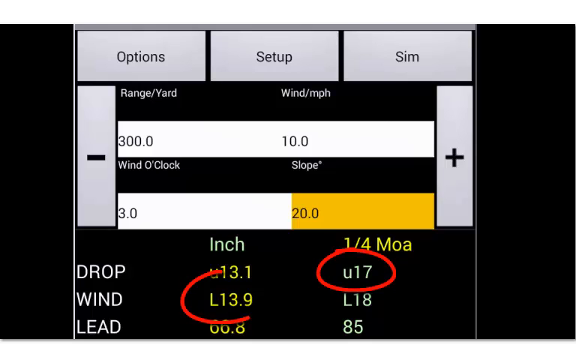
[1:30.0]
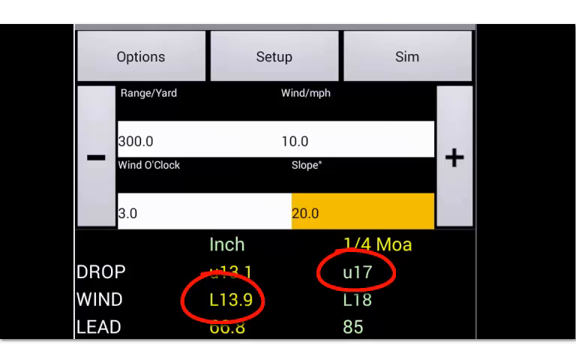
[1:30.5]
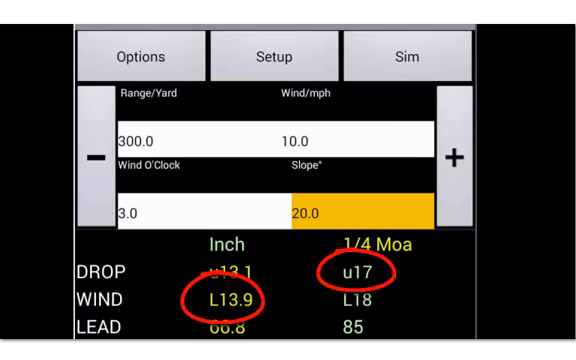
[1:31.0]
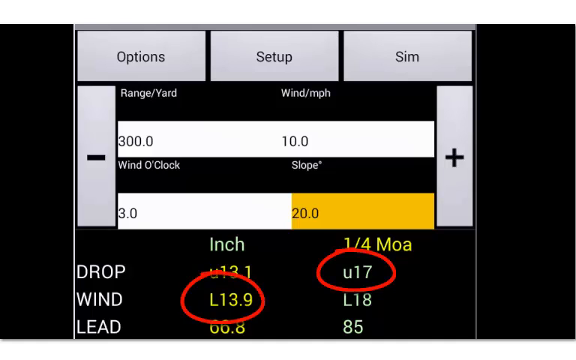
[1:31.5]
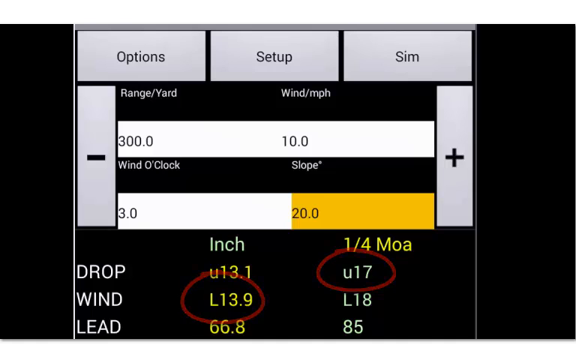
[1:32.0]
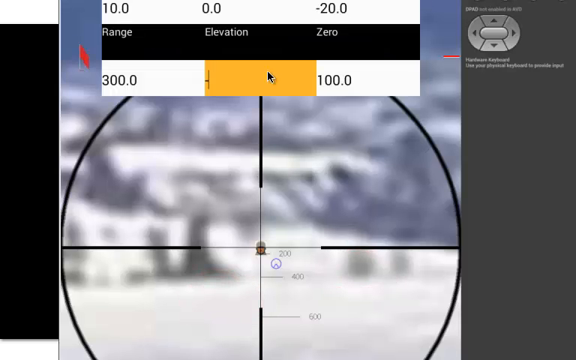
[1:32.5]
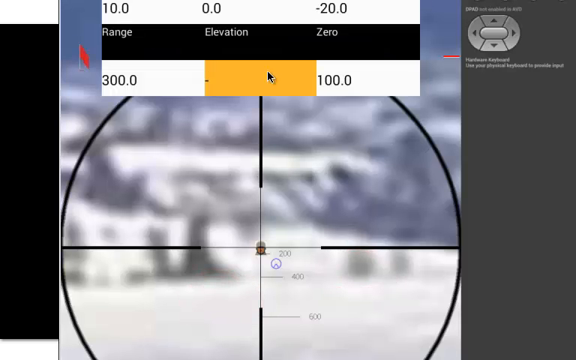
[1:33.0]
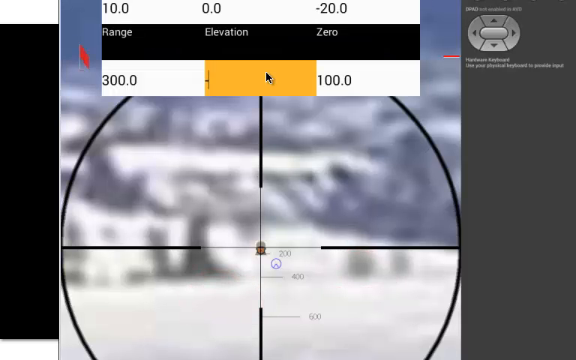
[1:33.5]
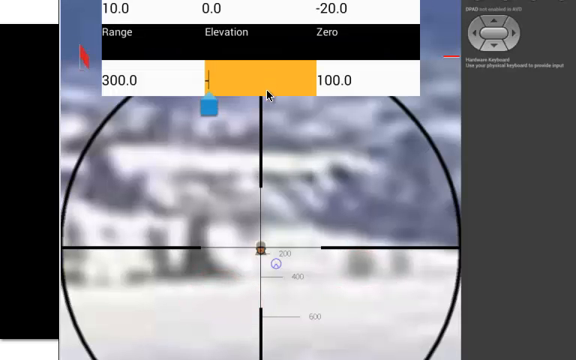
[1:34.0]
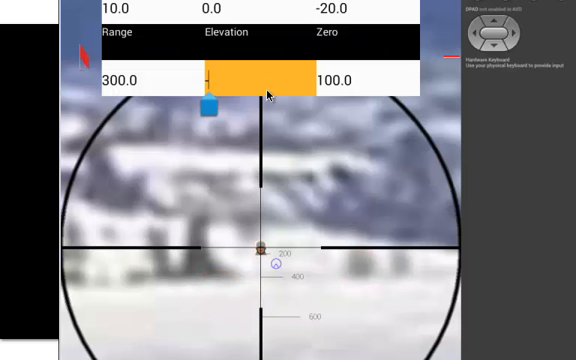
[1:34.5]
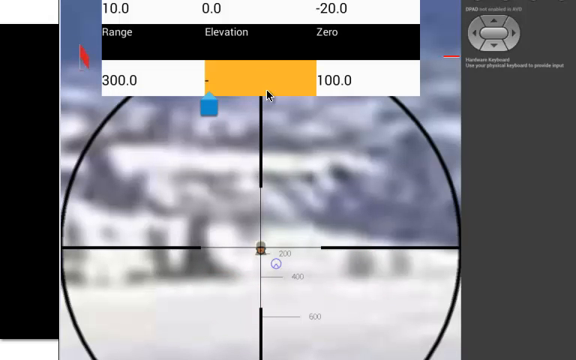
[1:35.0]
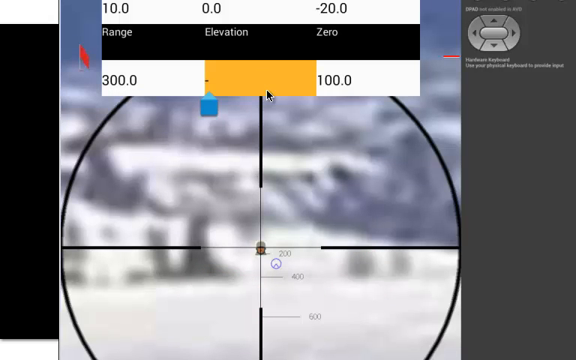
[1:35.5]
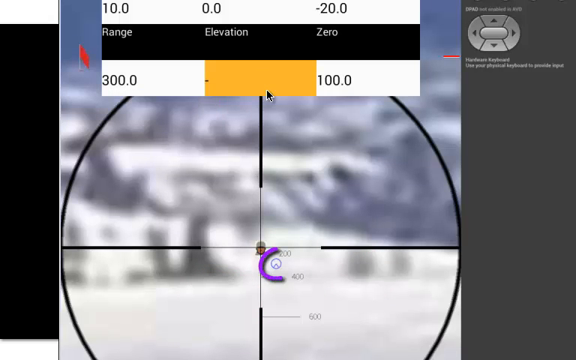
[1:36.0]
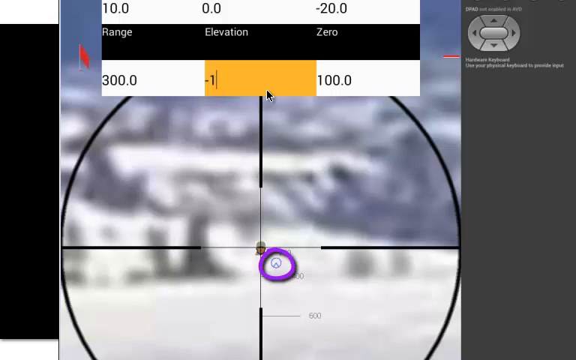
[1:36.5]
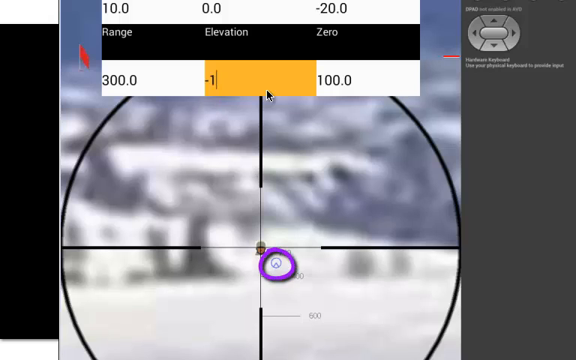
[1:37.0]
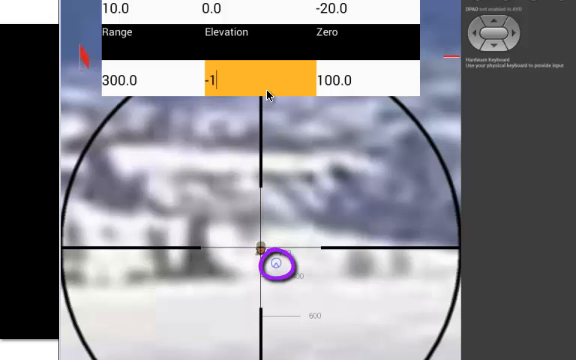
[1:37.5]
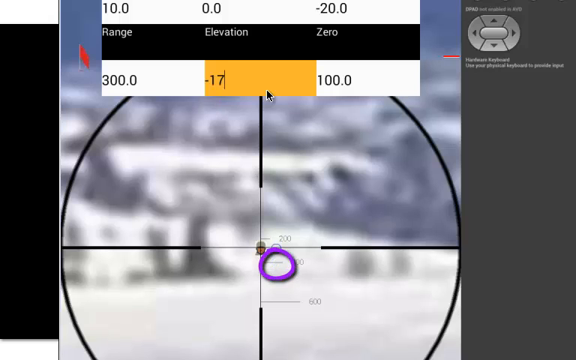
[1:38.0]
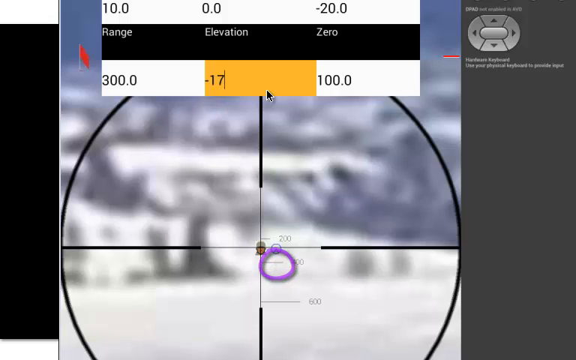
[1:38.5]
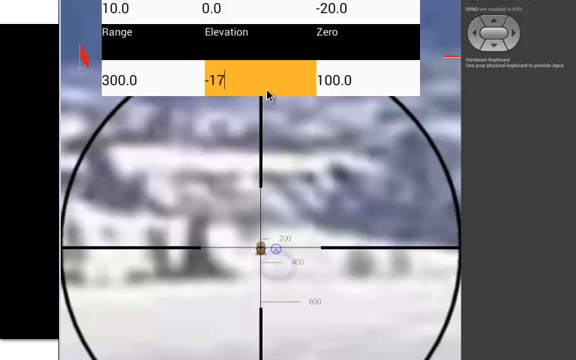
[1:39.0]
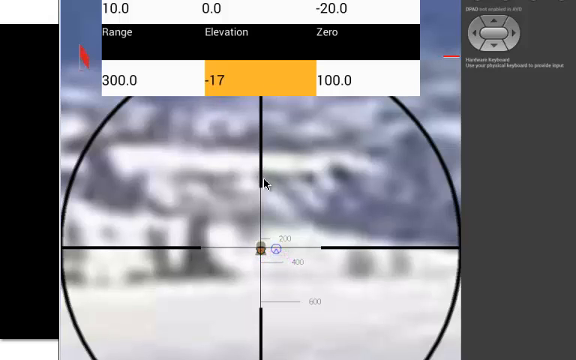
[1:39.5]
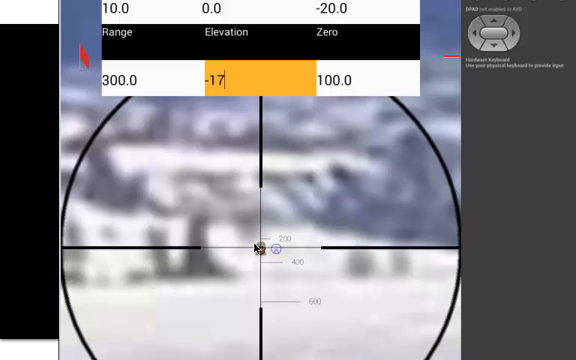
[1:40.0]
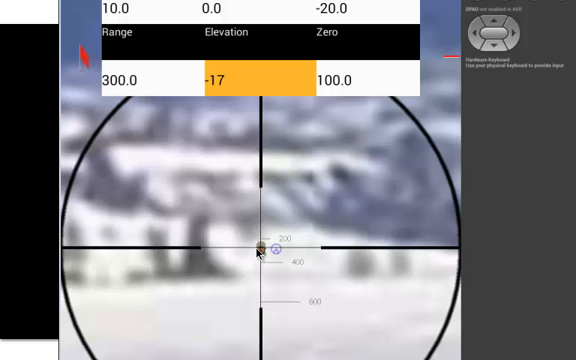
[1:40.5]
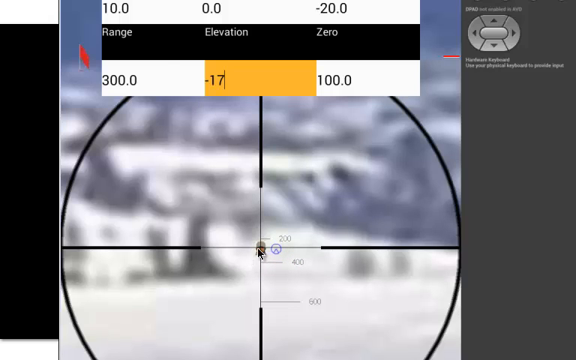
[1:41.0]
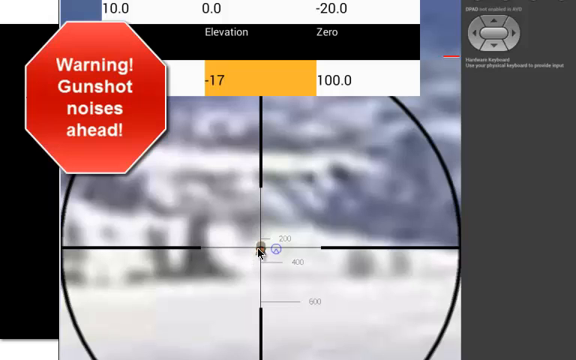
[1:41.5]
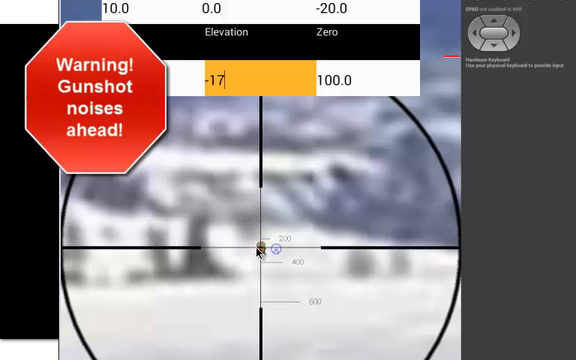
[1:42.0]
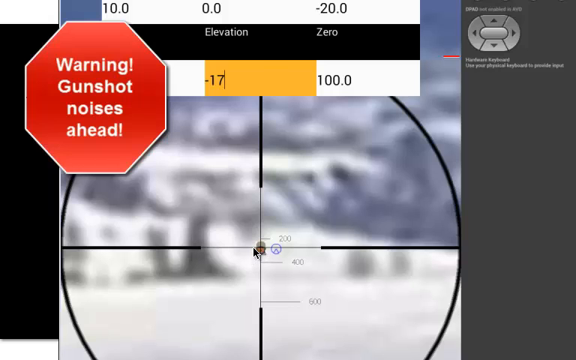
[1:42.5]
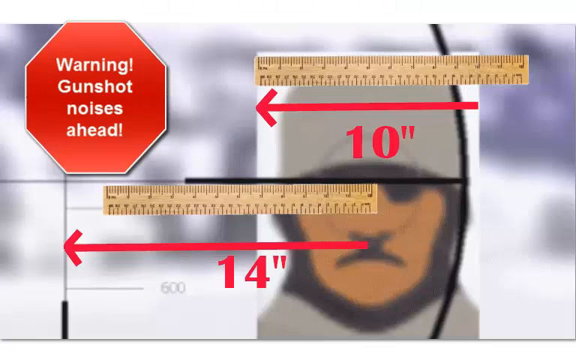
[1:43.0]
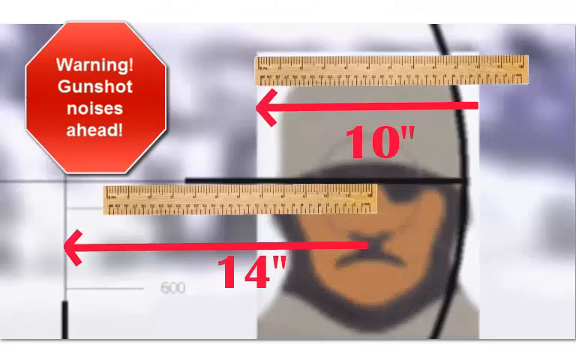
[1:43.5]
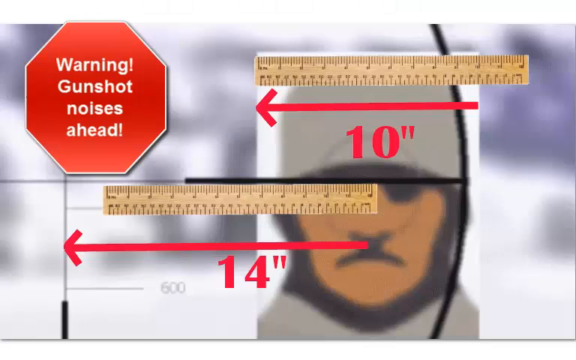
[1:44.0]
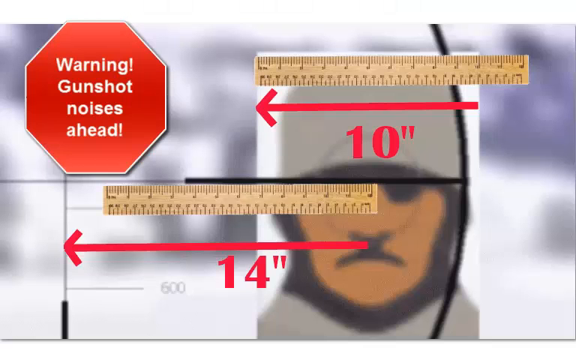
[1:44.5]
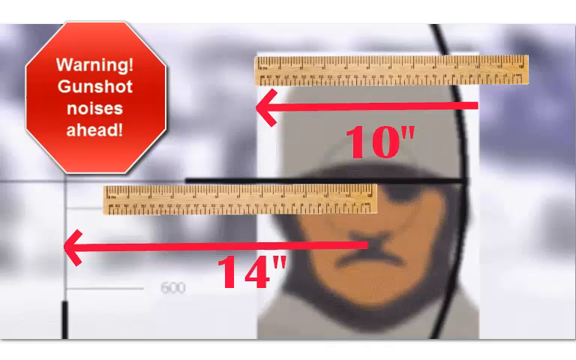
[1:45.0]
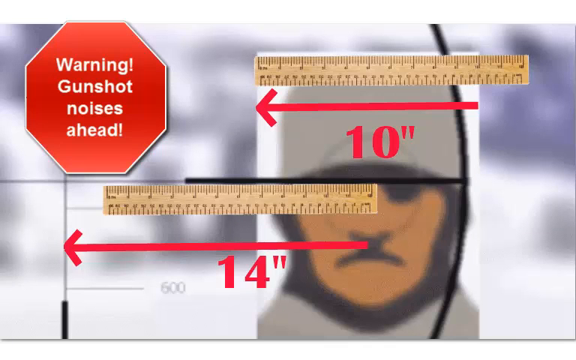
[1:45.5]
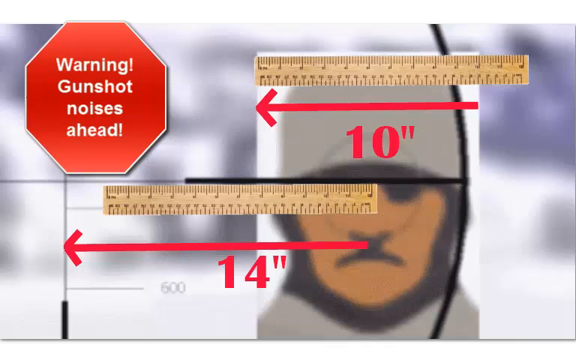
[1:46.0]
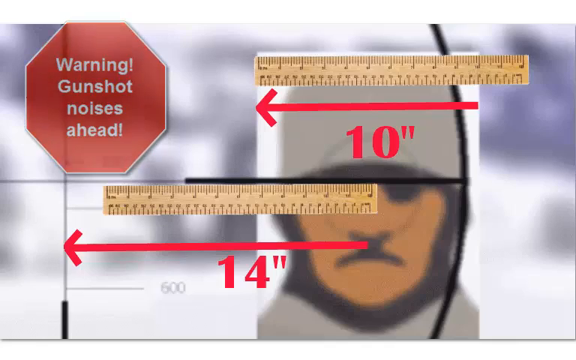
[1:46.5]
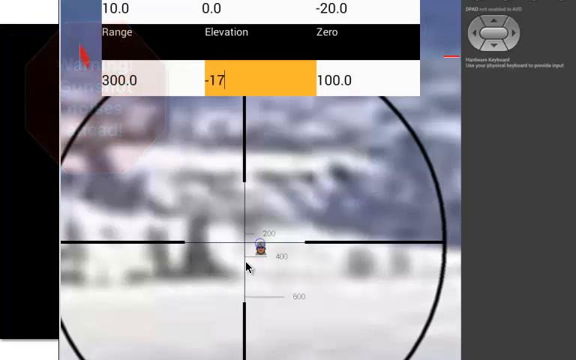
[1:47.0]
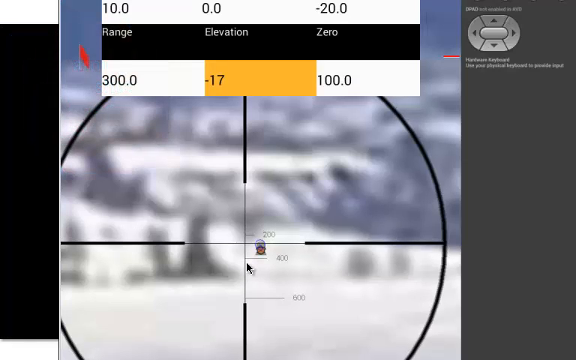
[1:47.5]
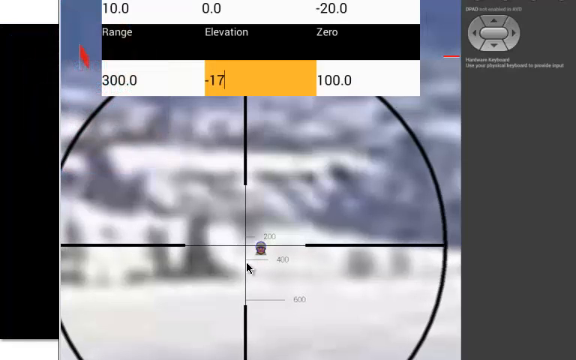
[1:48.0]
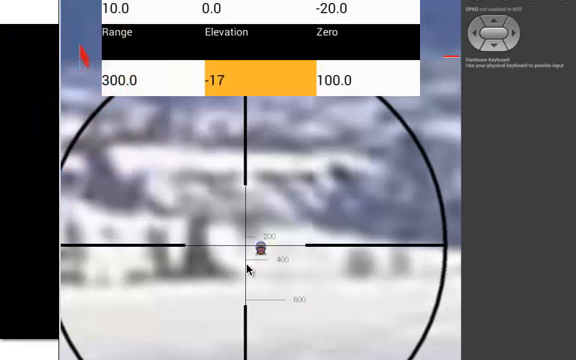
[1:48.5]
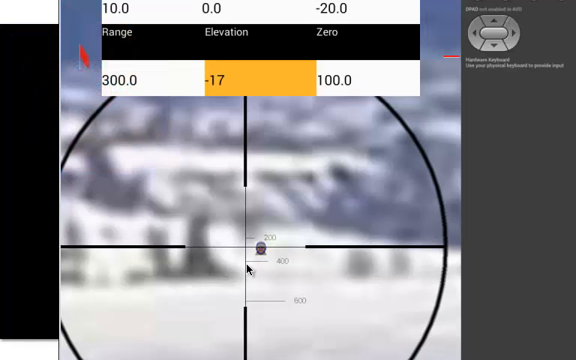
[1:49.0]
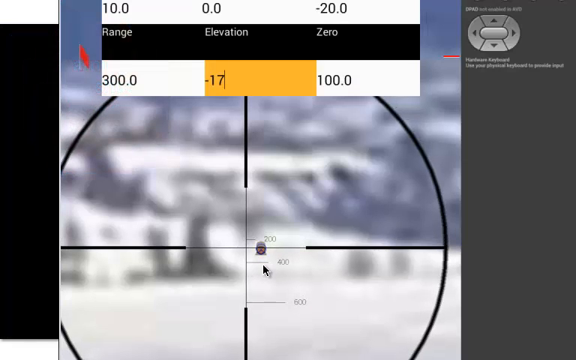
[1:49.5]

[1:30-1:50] The background is black with five gray buttons in total. The top three are rectangular, with black text reading "option", "set up" and "sim". Below them are rectangles: one with a black plus sign underneath sim, and one with a black minus sign underneath options. Under options, white text reads "range / yard", and under set up it reads "wind / MPH", with other items listed as well. The view returns to the one where the player is about to shoot, and underneath elevation it reads "-17". A red stop sign outlined in white pops up, reading in white "warning!", "gunshot", "noises", "ahead!". Then two wooden rulers appear. Under the first, a red arrow points toward the sign with "10 inches" underneath; under the other, an arrow points the same direction, going under a leaf design, also in red, with "14 inches".